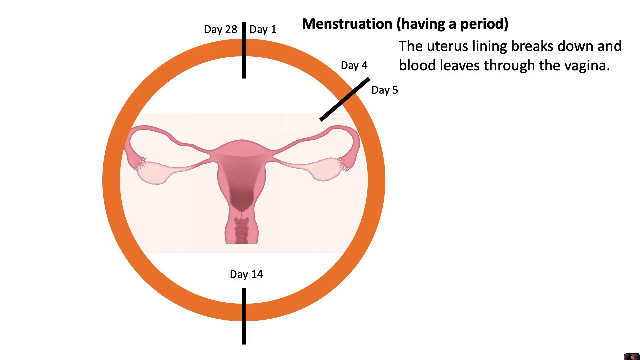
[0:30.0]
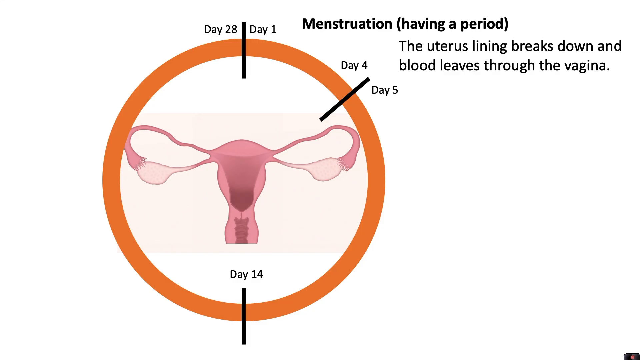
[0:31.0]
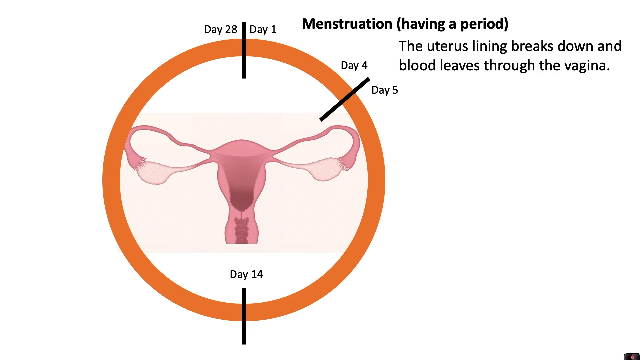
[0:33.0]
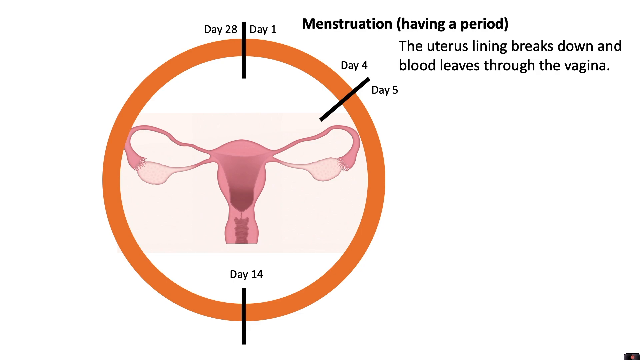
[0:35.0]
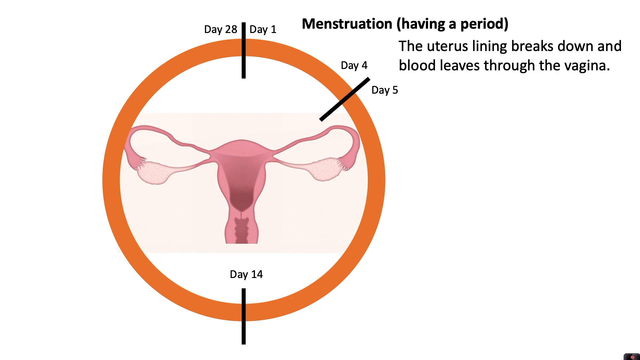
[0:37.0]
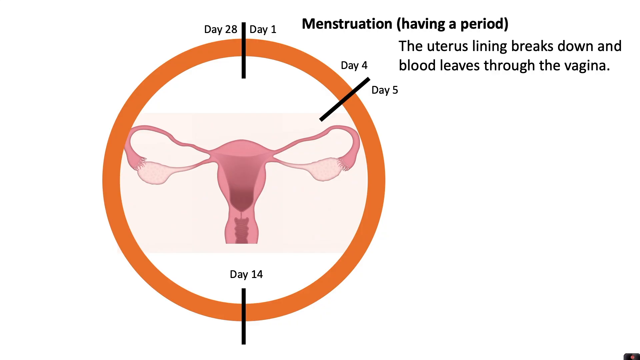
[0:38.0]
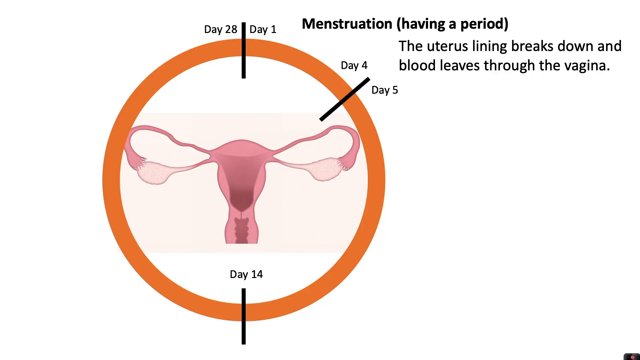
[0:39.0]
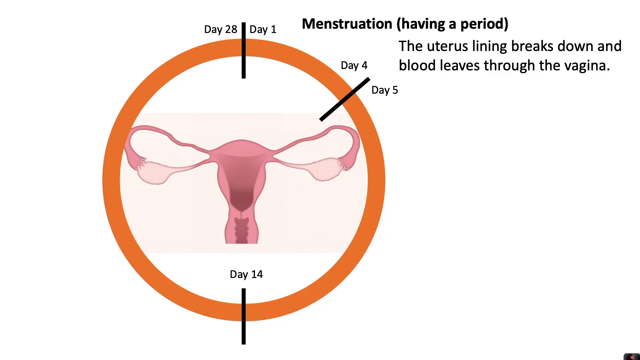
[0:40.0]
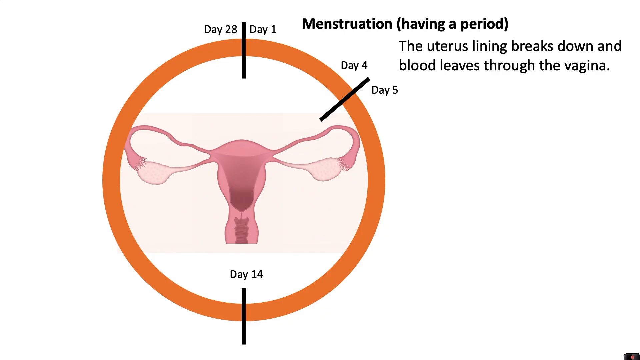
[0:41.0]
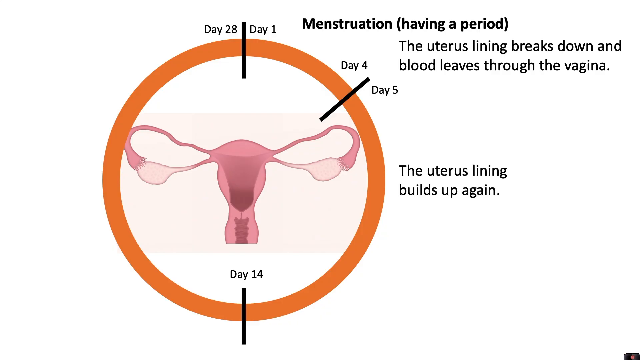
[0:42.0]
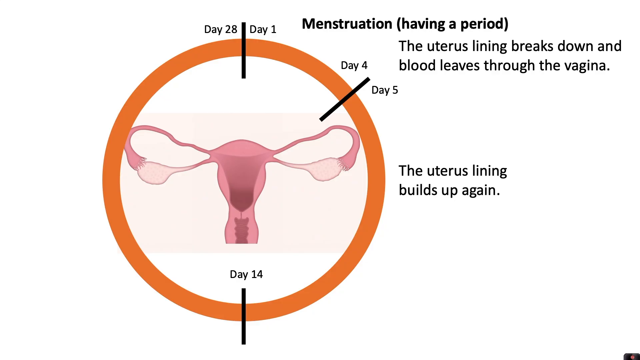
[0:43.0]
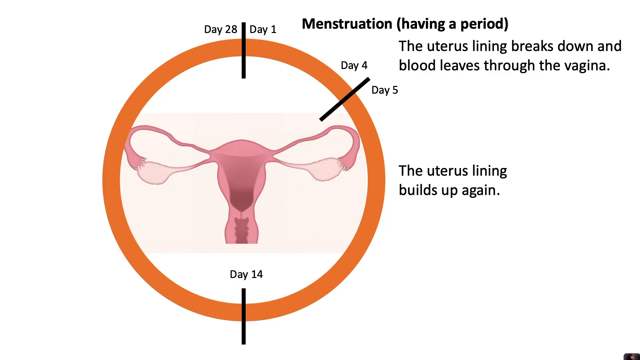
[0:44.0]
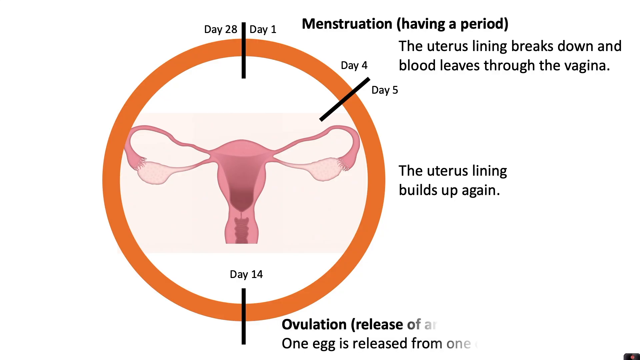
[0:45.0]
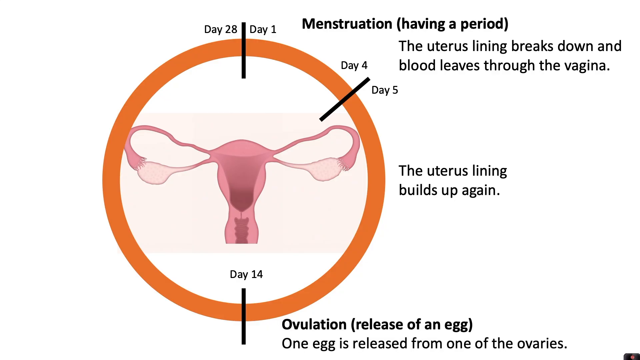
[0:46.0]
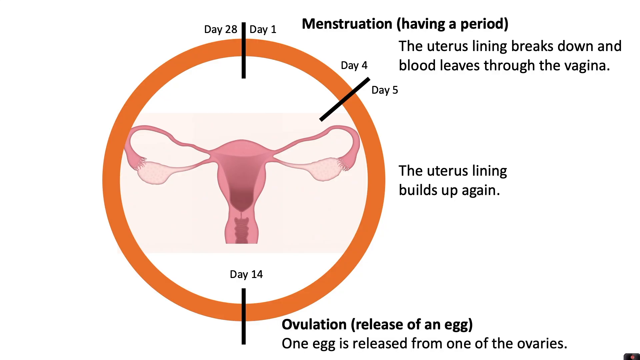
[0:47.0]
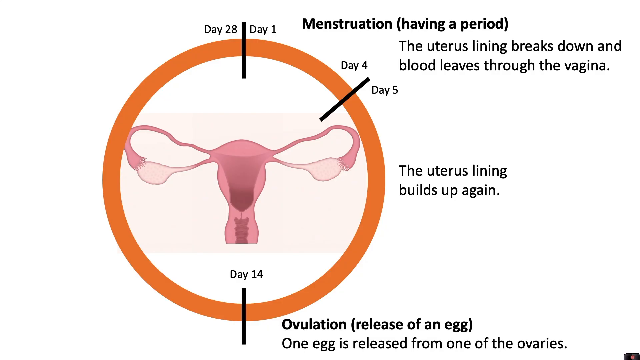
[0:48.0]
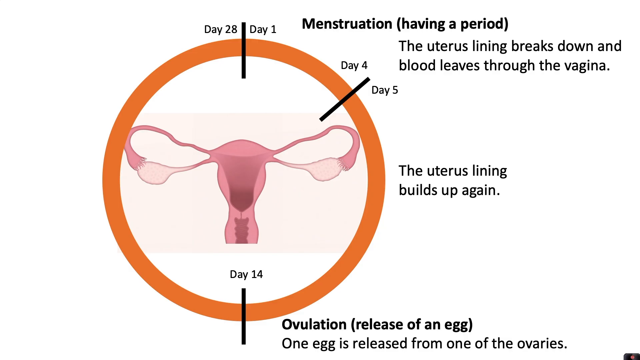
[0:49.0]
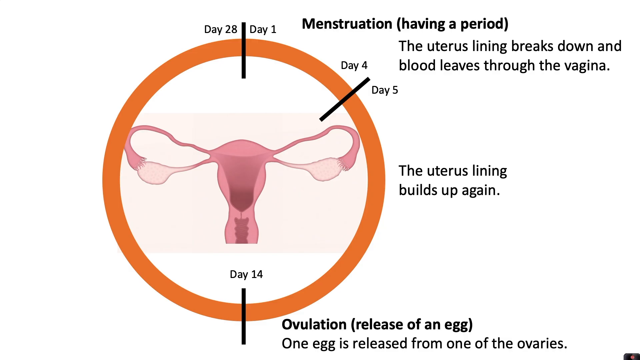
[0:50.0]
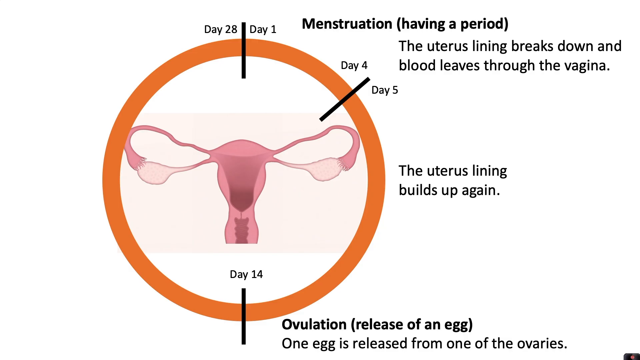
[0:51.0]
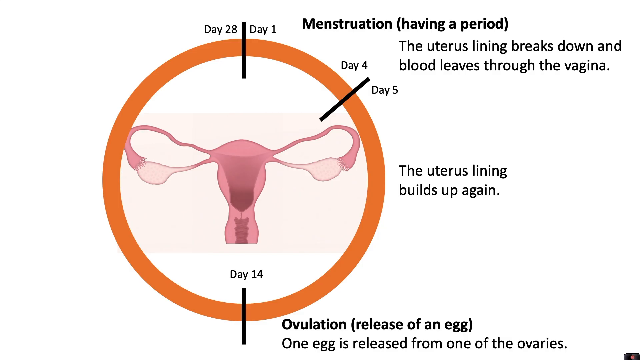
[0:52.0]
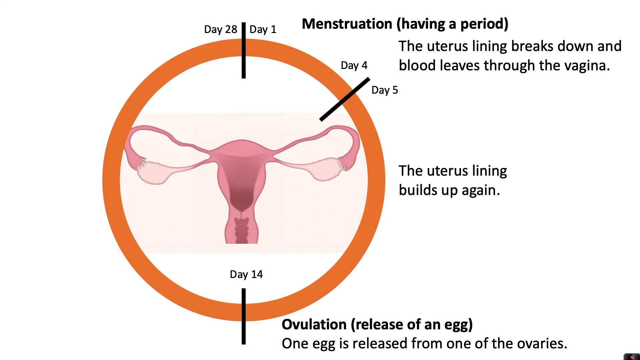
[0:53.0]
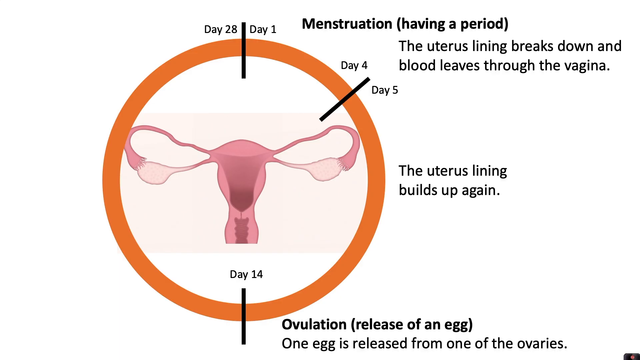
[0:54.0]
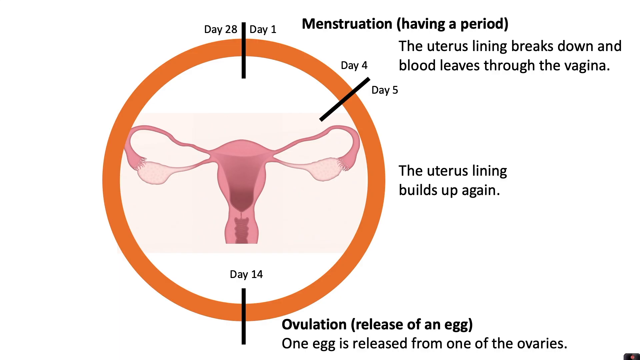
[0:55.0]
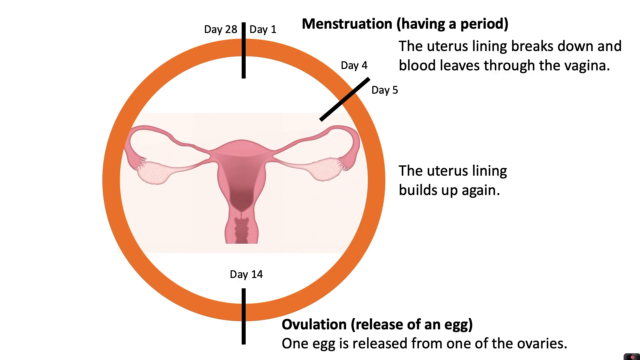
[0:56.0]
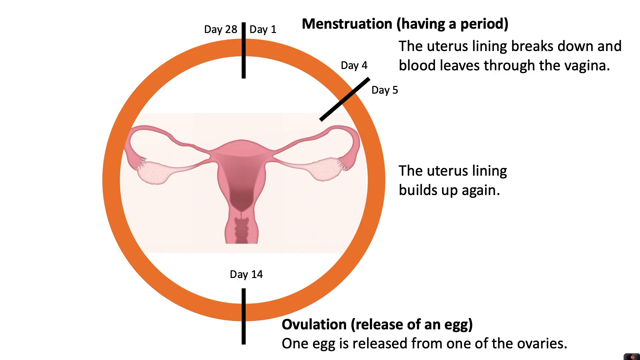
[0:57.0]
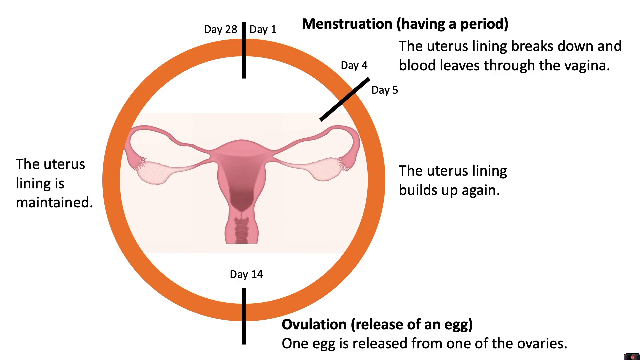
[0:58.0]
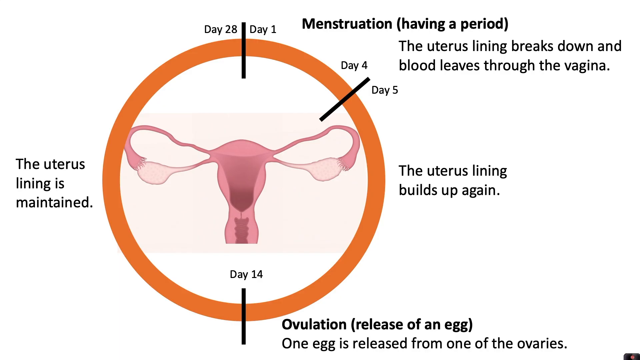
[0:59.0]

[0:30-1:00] A slide with a white background shows a large circle outline with an orange border. Inside the circle is what looks like a clipart image of a woman's reproductive system, and tick marks around the circle mark days 28, 1, 4, 5 and 14. In the upper right corner of the screen, text reads "menstruation (having a period)," and beneath that, "The uterus lining breaks down and blood leaves through the vagina." Below that, to the right side of the circle, text reads "The uterus lining builds up again." Toward the bottom of the circle, text reads "ovulation (release of an egg). One egg is released from one of the ovaries." Then black text pops up on the left side of the circle reading "The uterus lining is maintained."